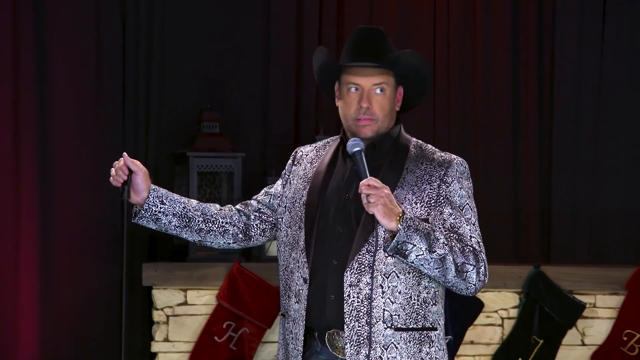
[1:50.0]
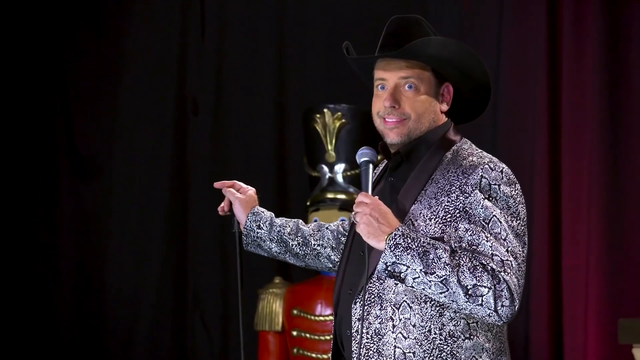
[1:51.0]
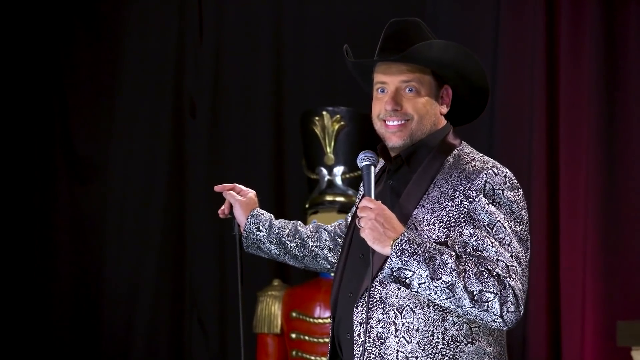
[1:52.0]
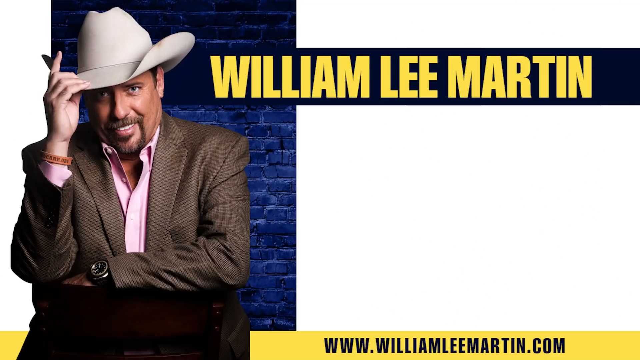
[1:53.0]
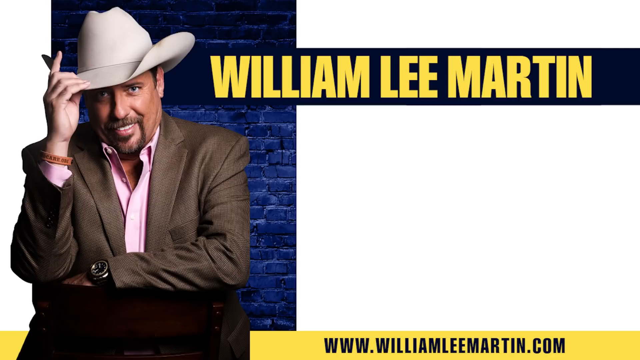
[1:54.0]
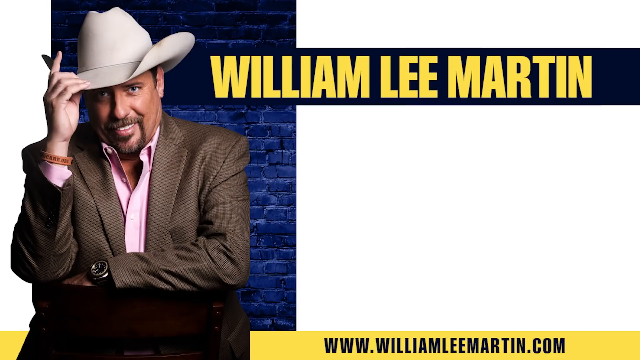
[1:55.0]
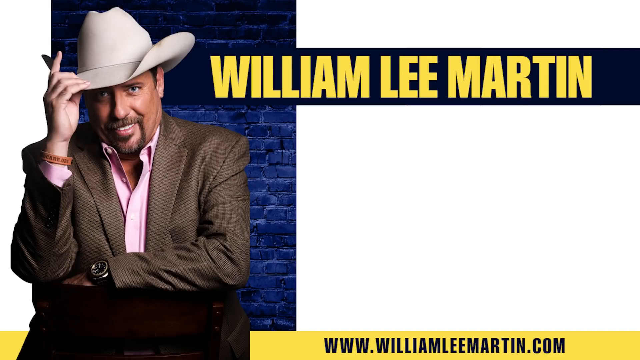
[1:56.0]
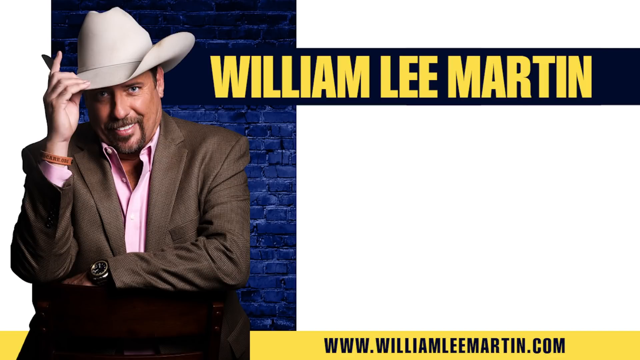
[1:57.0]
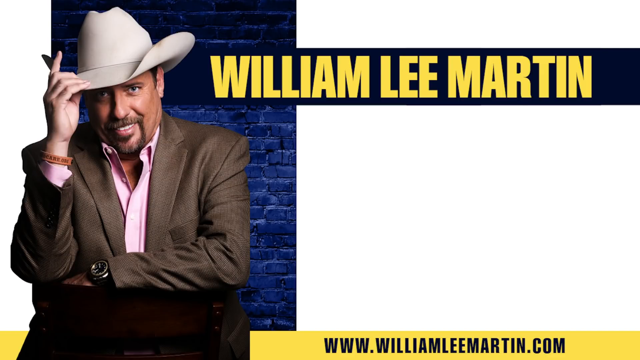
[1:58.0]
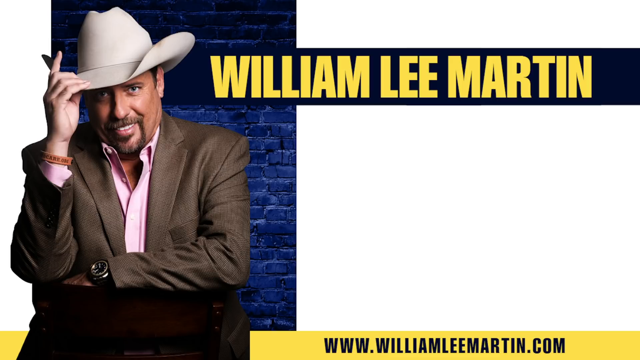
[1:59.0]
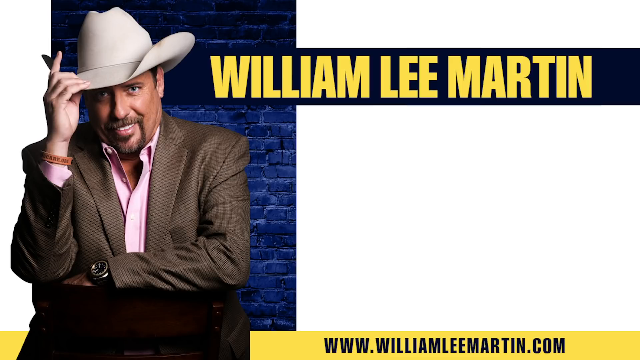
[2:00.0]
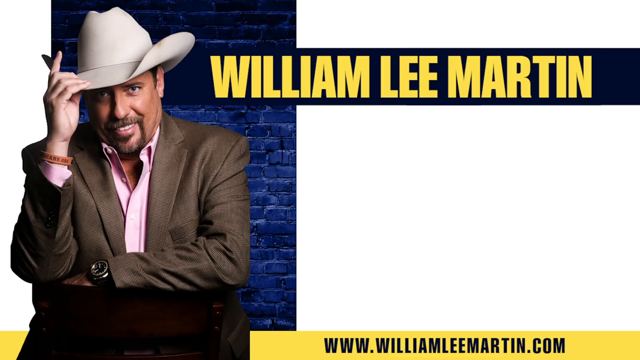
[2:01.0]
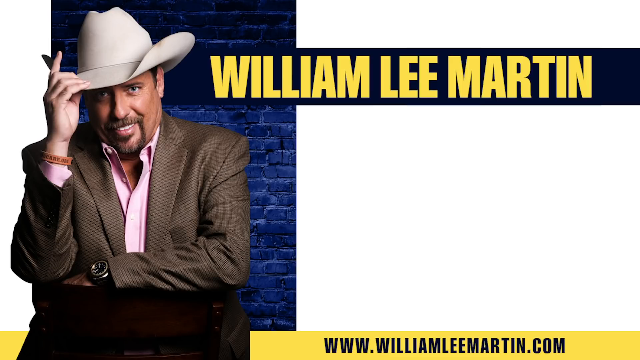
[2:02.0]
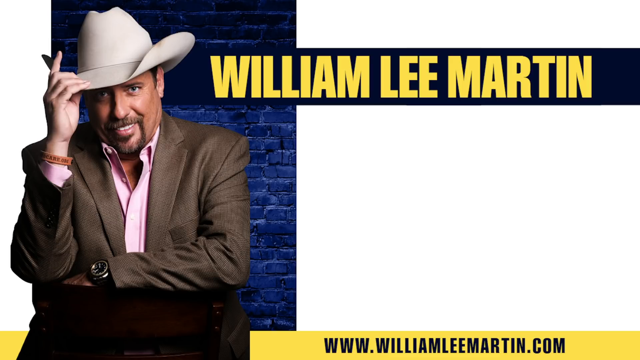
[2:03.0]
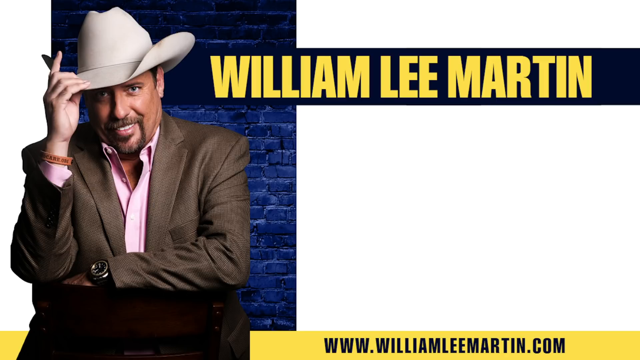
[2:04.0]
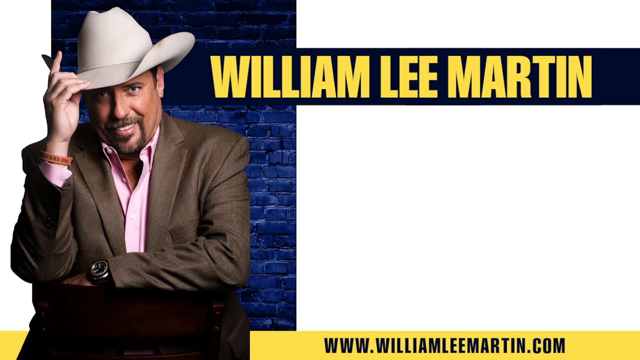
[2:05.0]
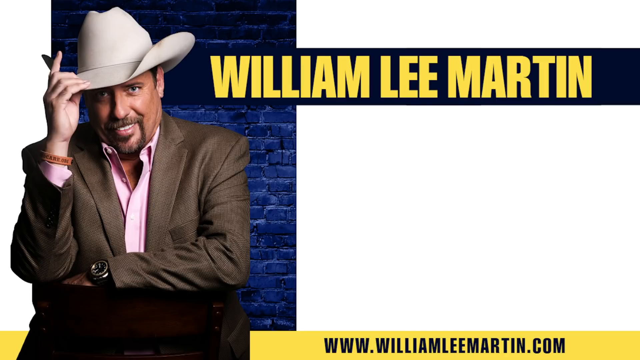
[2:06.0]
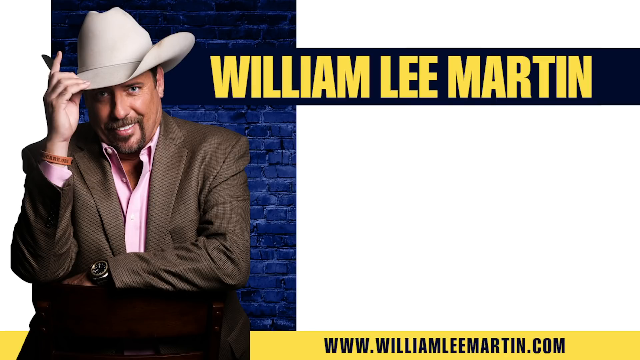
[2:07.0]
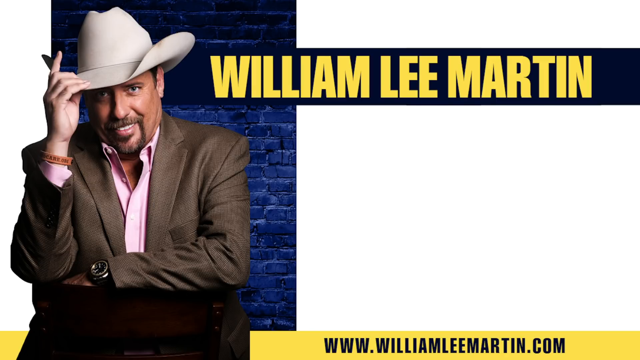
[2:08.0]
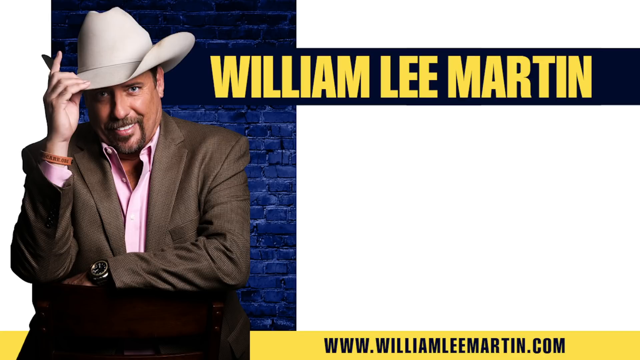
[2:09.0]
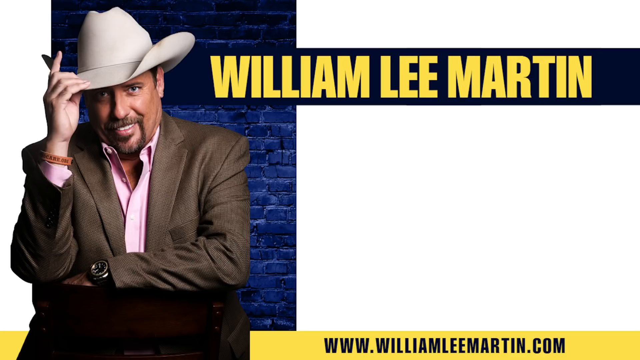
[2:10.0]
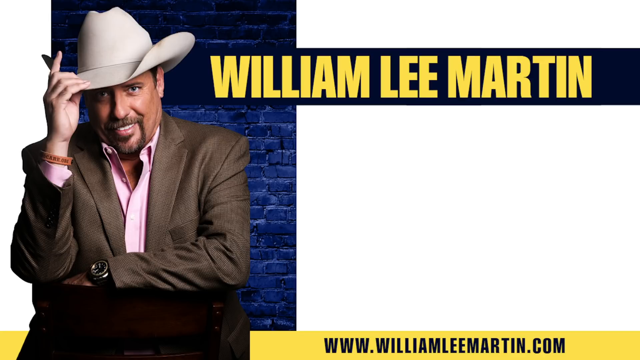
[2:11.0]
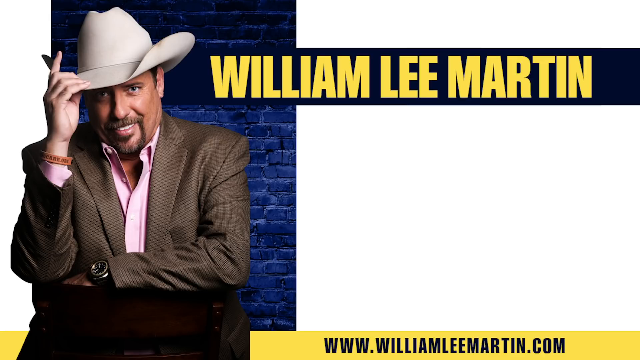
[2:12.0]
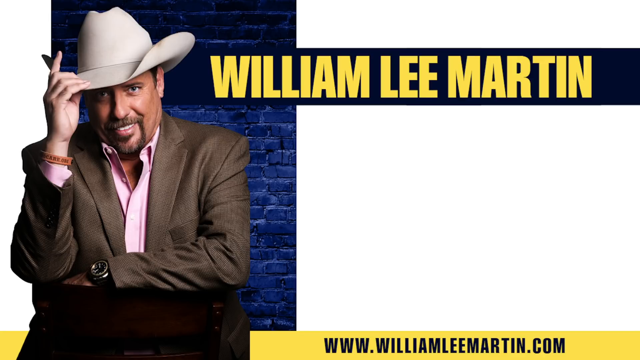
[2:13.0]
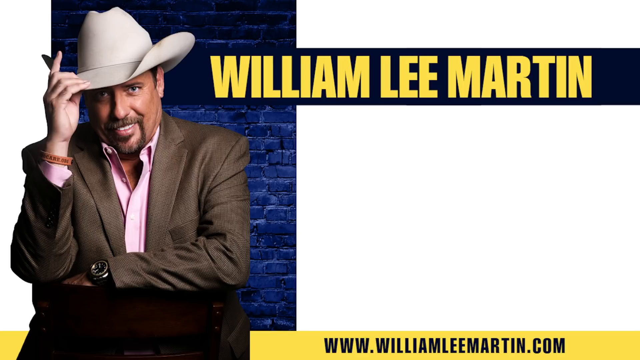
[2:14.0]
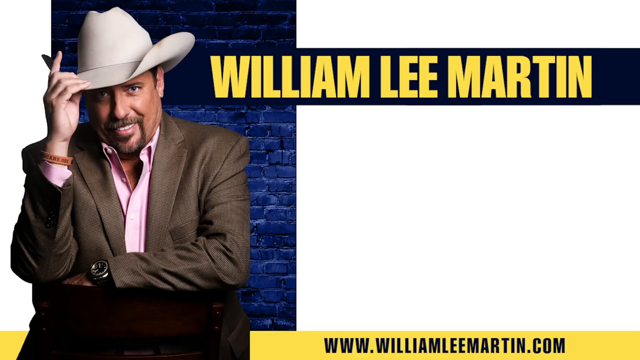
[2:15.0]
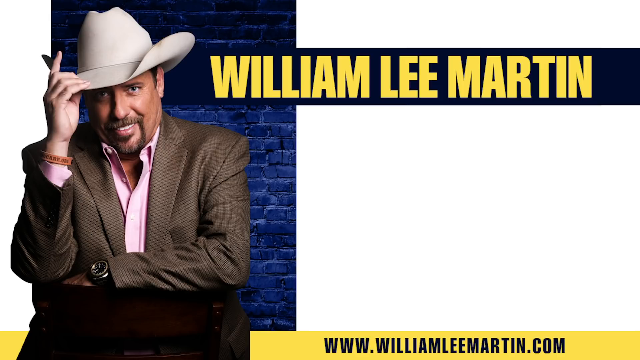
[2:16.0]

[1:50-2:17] The man is near the stage as he concludes. The video then goes to another screen that says "William Lee Martin", the author of the talk. He appears serious while standing on the podium. He wears a purple shirt, a gray jacket, a black watch on his left hand and a white hat that flips up slightly toward the left edge. He has a brown, round wristband on his right hand. The bricks in the background are blue, and he appears to stay still. On his right hand, his index finger points up while the other three fingers are folded down.